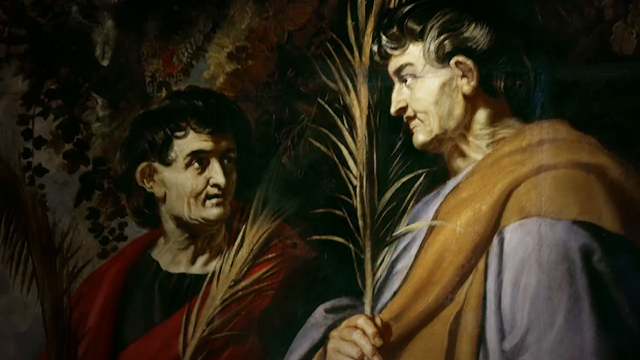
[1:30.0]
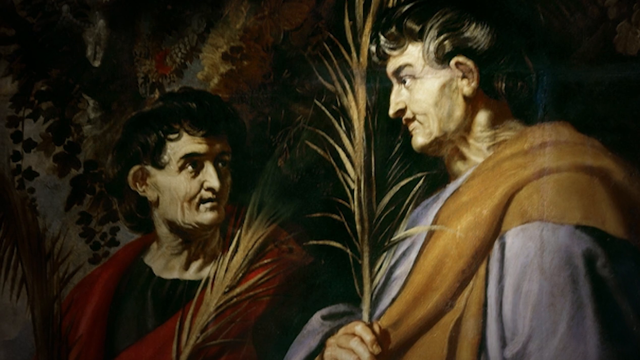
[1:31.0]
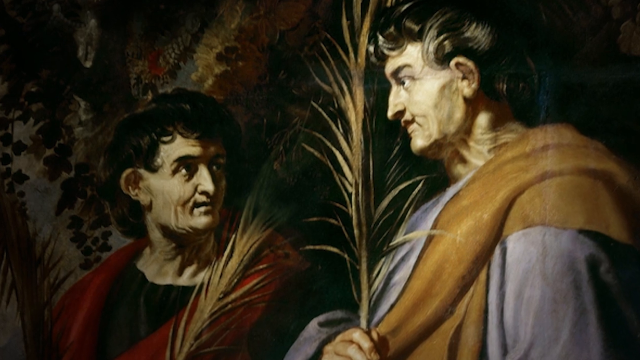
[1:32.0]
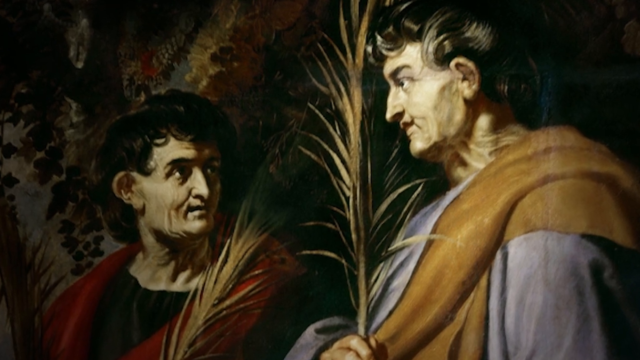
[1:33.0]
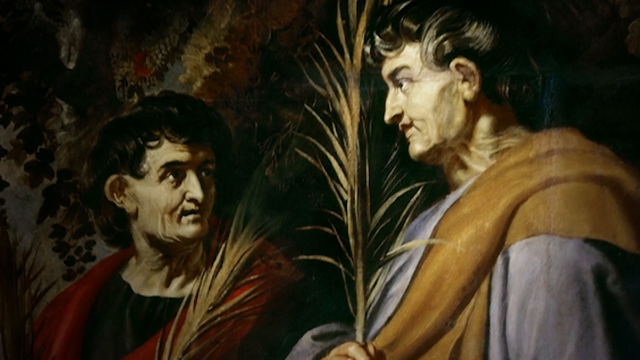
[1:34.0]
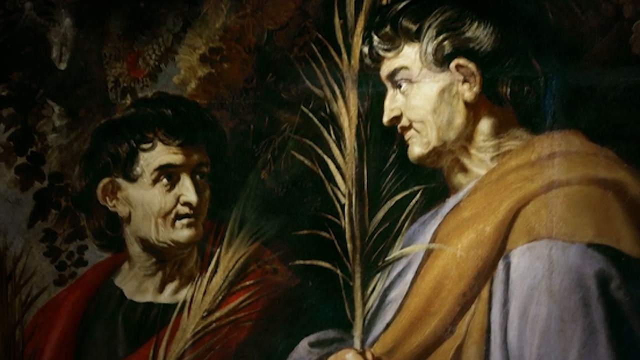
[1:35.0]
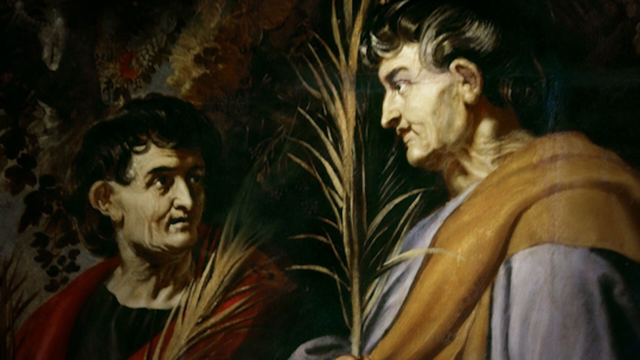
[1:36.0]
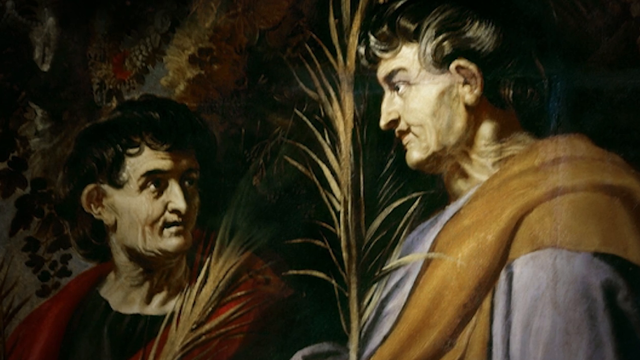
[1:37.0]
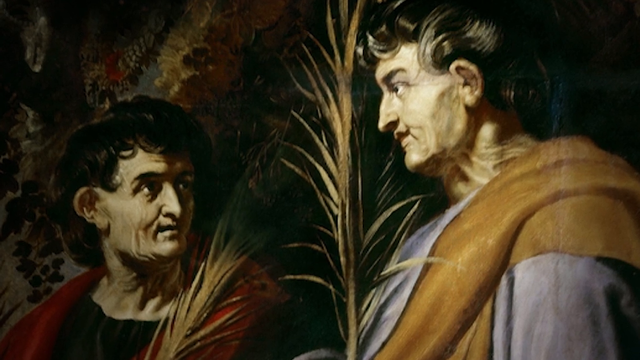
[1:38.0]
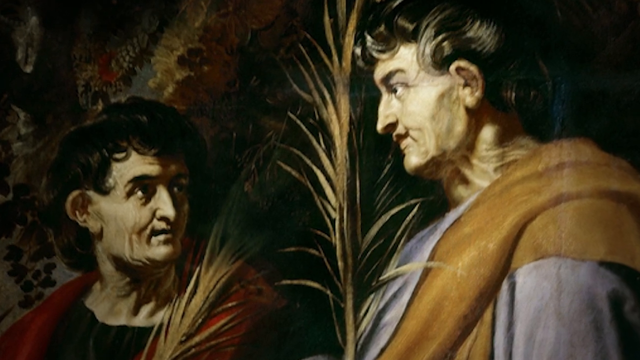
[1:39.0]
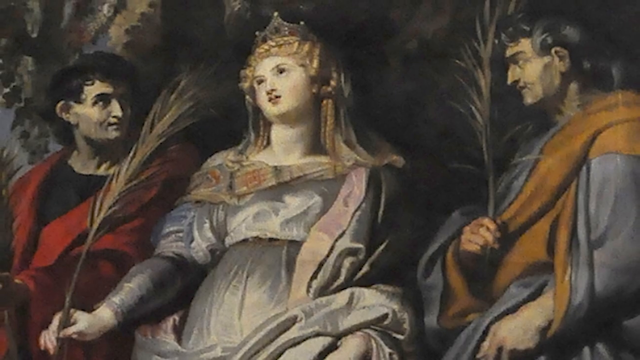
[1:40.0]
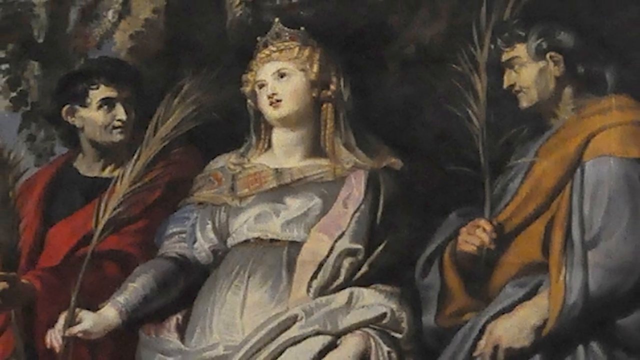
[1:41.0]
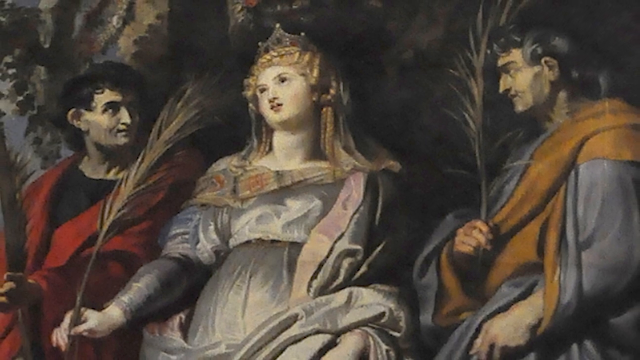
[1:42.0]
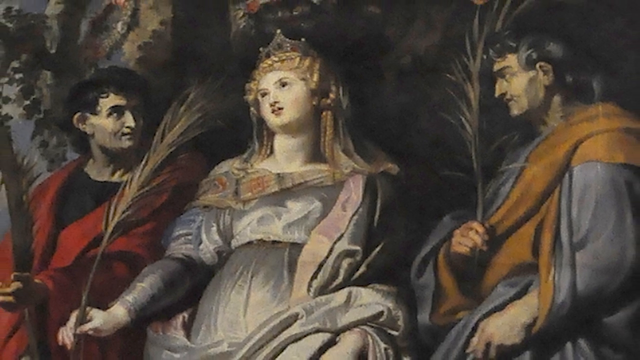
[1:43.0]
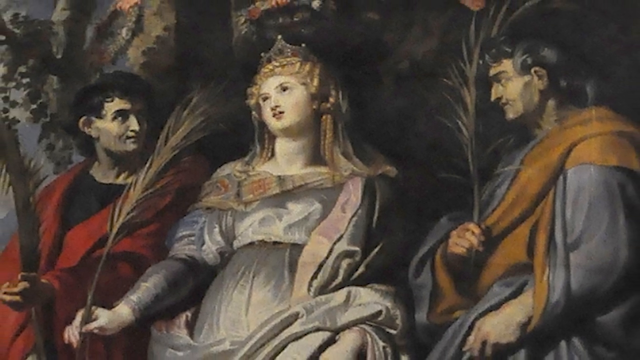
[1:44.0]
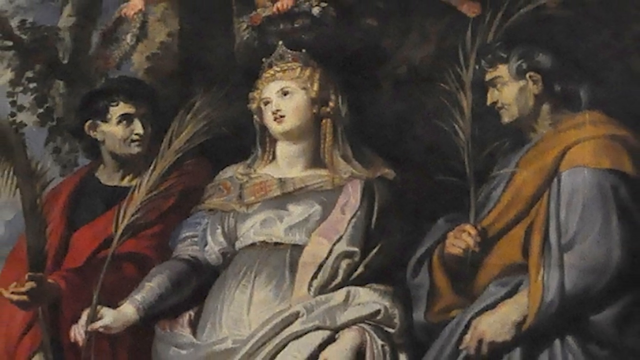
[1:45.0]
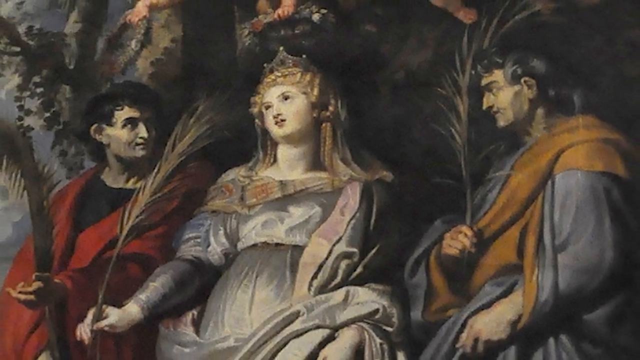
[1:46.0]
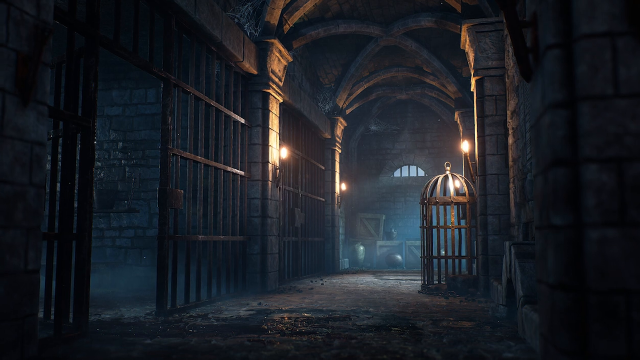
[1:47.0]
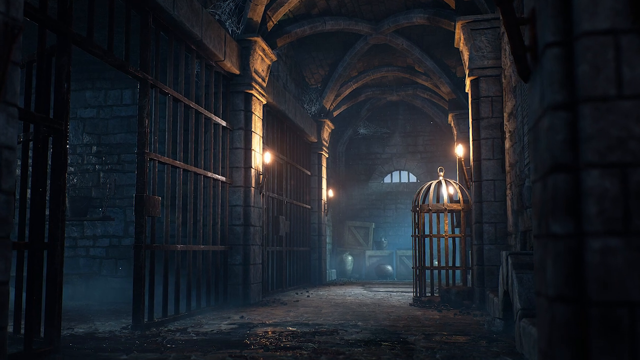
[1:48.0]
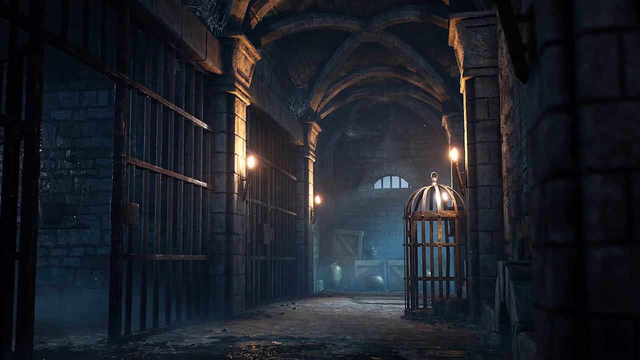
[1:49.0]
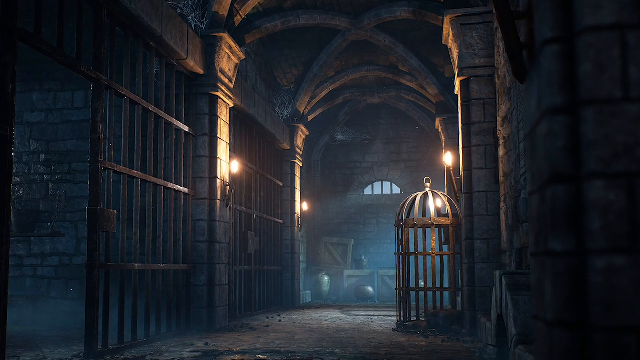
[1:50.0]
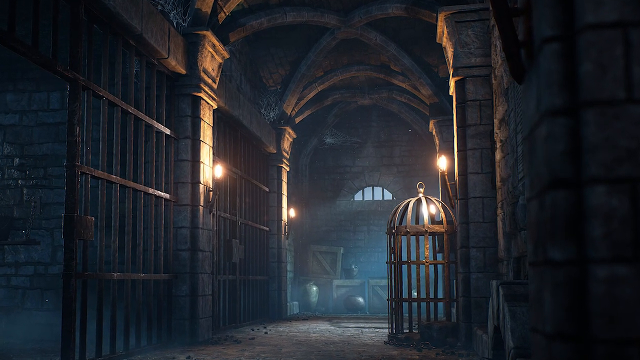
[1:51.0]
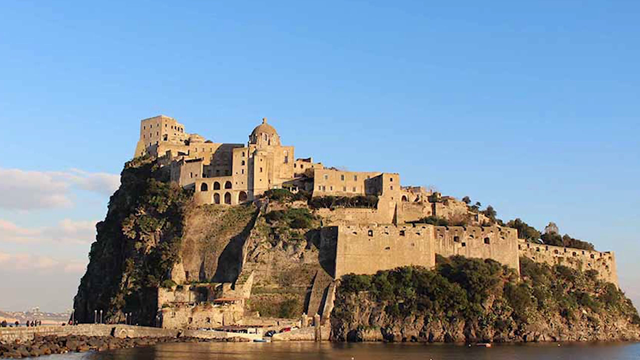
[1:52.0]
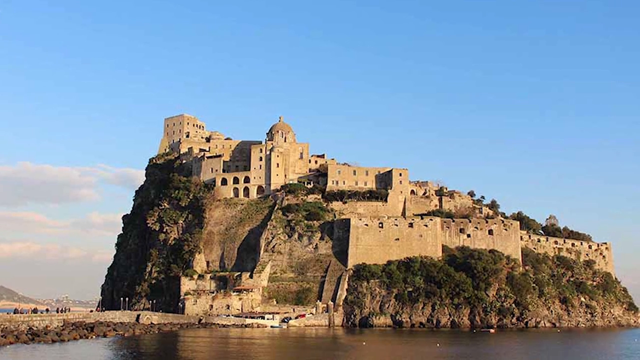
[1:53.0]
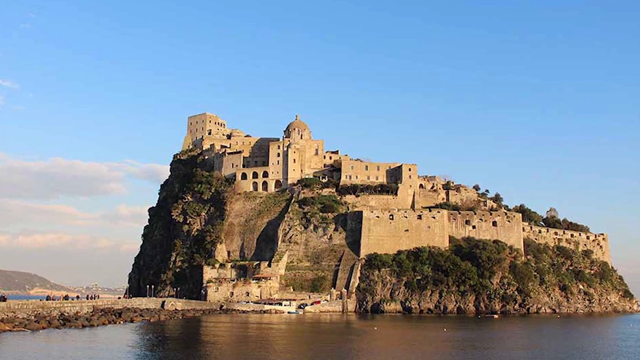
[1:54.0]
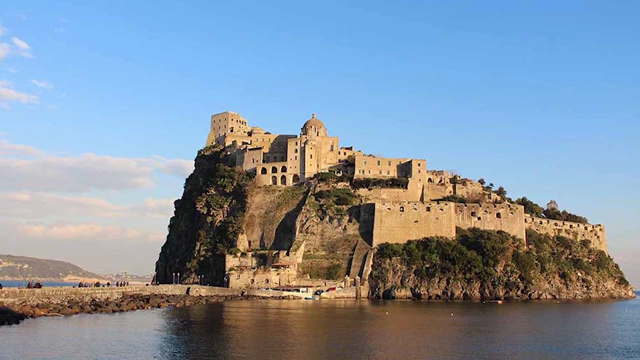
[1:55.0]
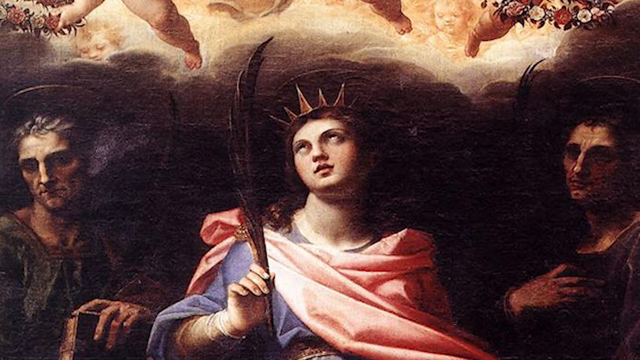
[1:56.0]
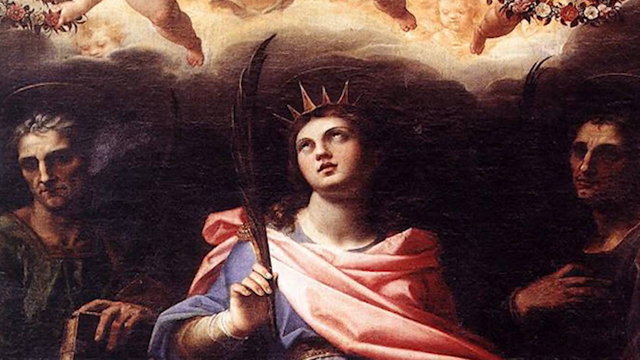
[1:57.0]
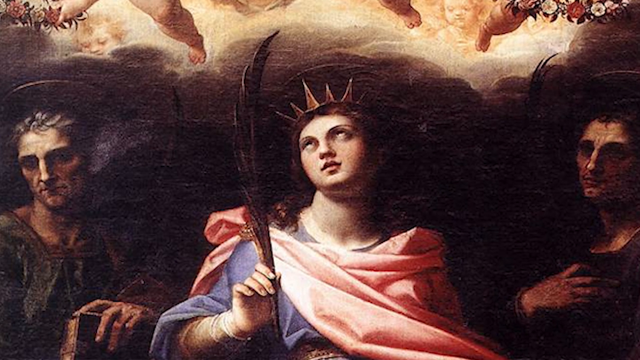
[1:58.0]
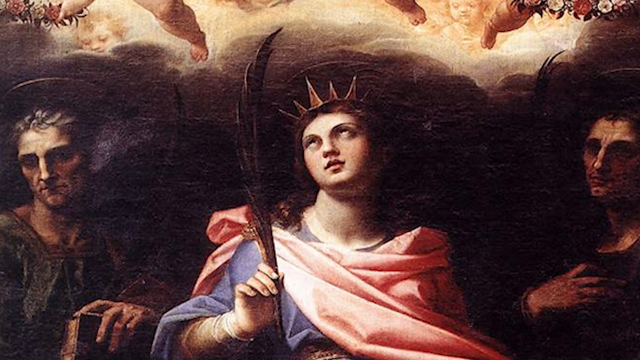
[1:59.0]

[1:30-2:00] A collection of still images is shown. The first is an oil painting of two men looking at each other; the shorter one wears red and the other wears brown and blue, and both hold some sort of reed or plant. The next is another oil painting featuring the same two men, now with a woman between them who has a light blue dress, long blond hair and what appears to be a crown. The next image looks like a prison in a dungeon or cellar, with lanterns on the walls and metal bars as doors. This is followed by a photograph of an island with some old structures on it, and the final image is another oil painting.